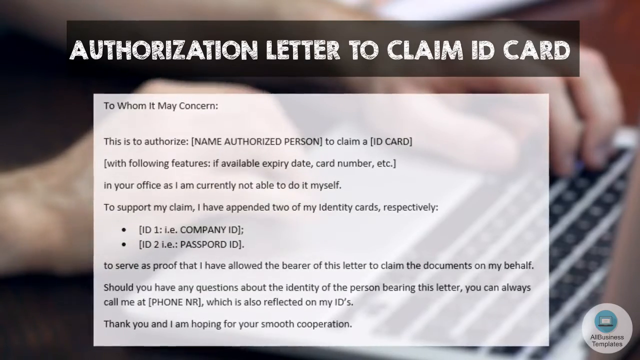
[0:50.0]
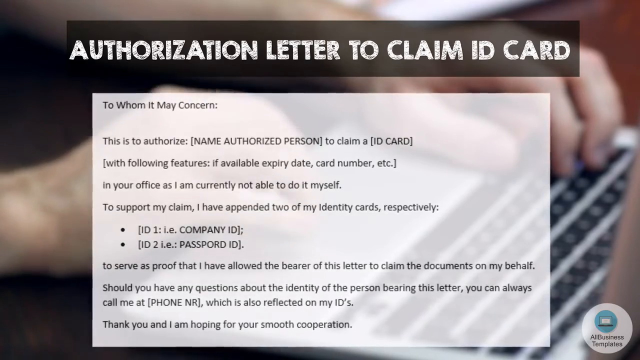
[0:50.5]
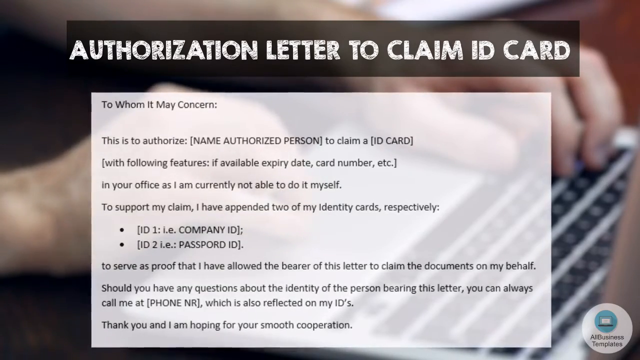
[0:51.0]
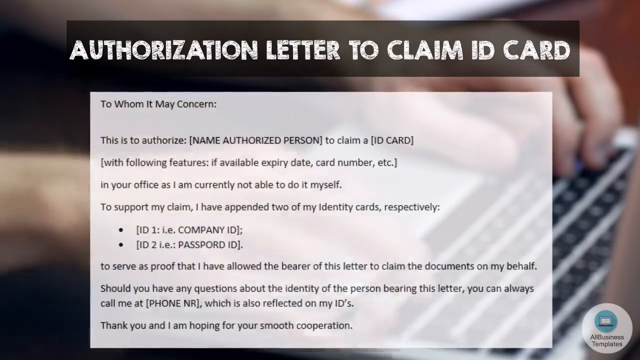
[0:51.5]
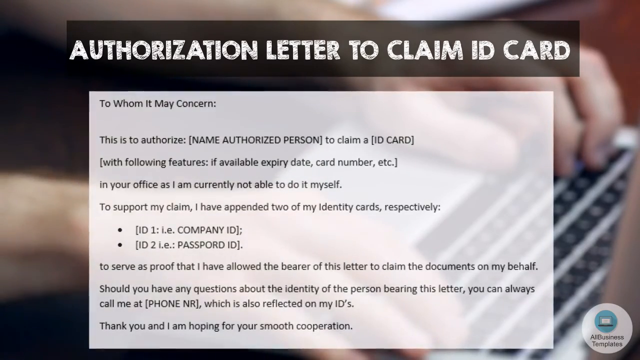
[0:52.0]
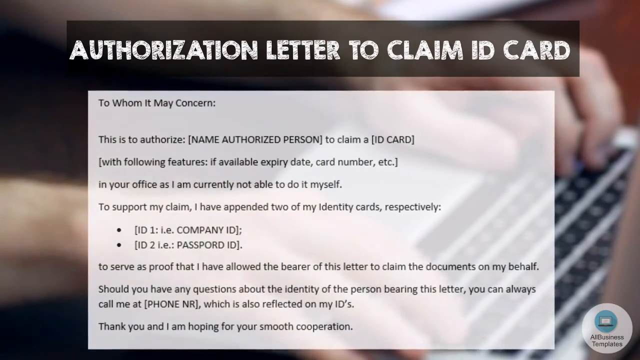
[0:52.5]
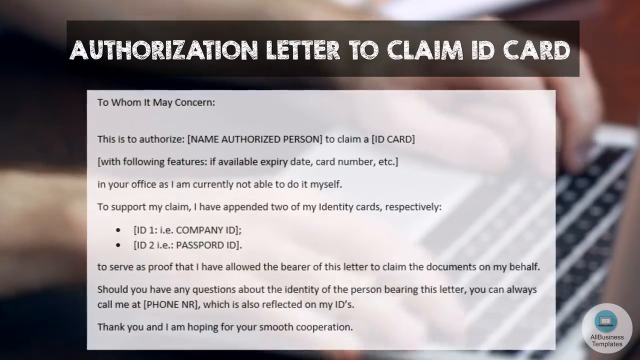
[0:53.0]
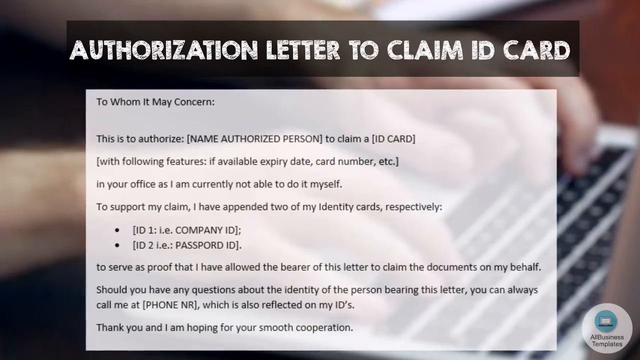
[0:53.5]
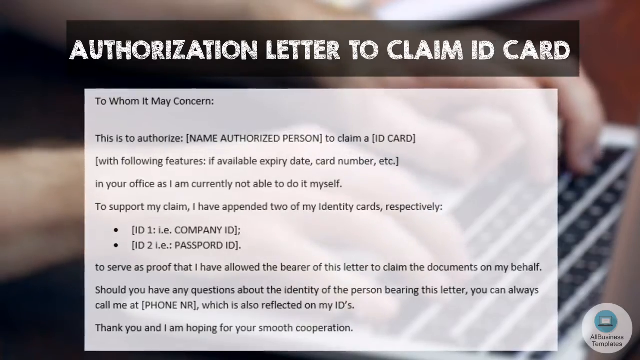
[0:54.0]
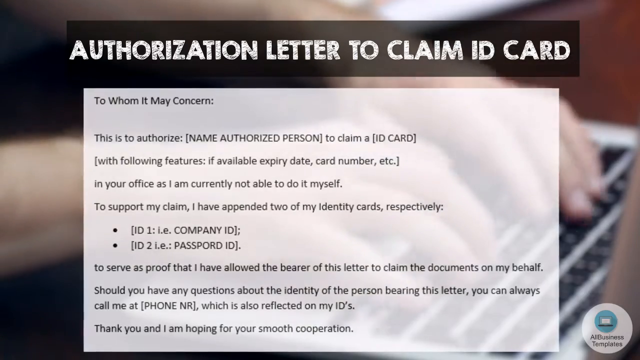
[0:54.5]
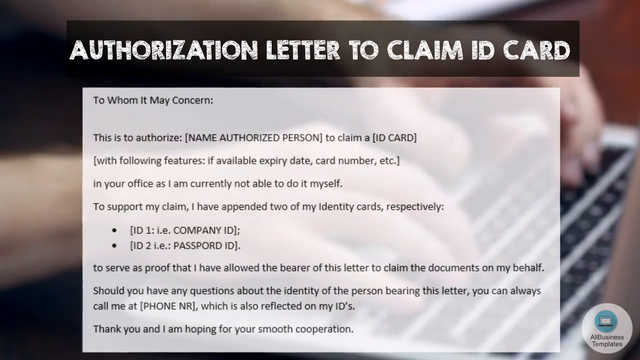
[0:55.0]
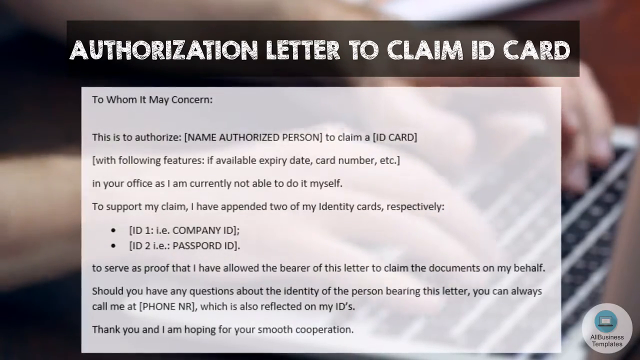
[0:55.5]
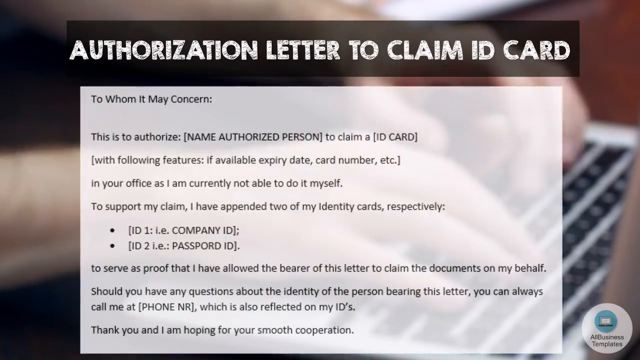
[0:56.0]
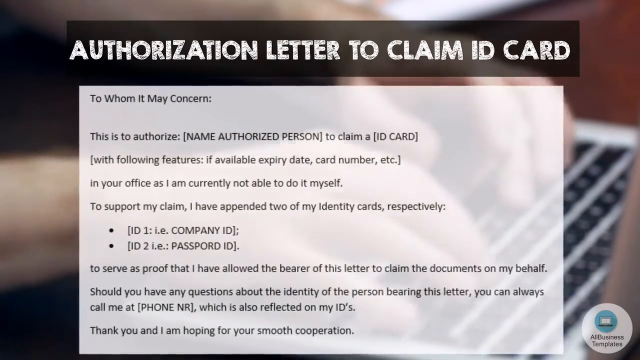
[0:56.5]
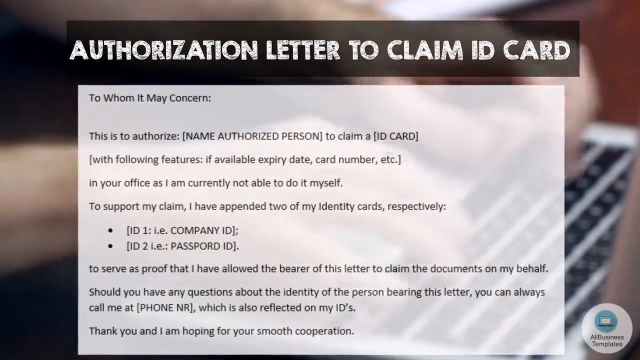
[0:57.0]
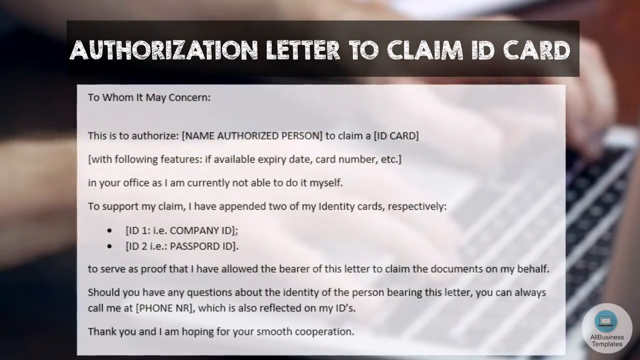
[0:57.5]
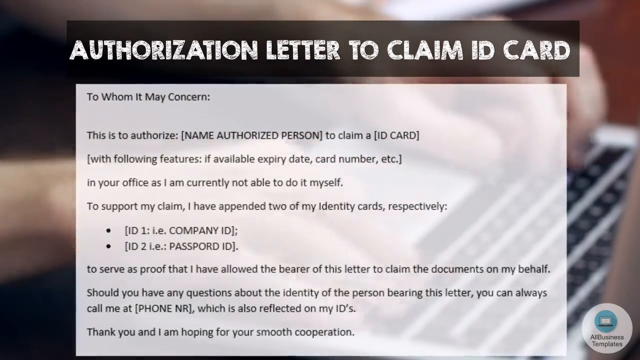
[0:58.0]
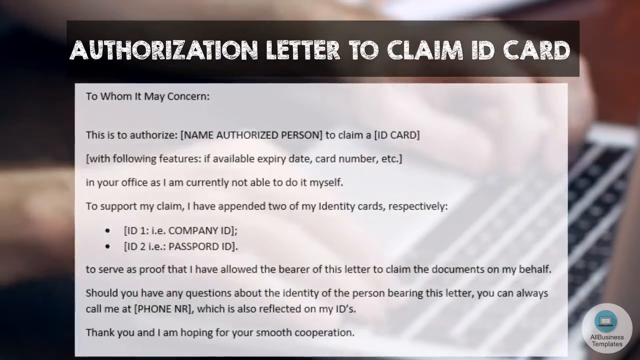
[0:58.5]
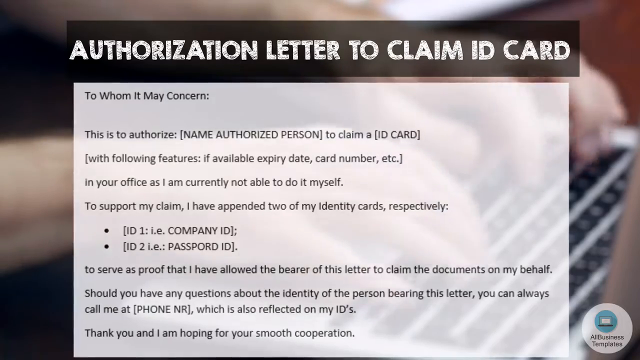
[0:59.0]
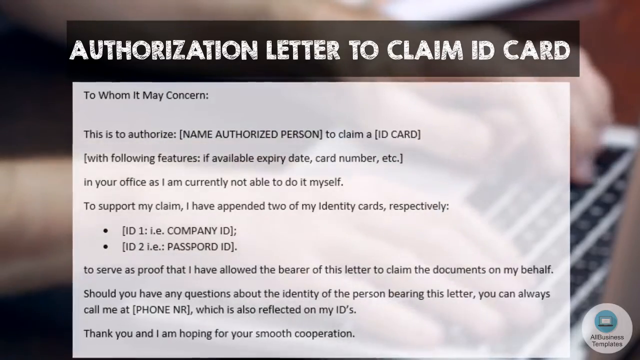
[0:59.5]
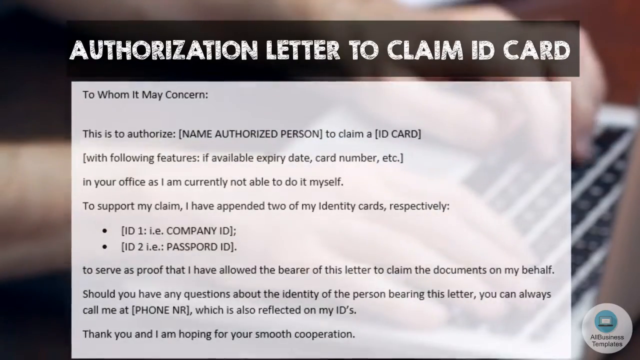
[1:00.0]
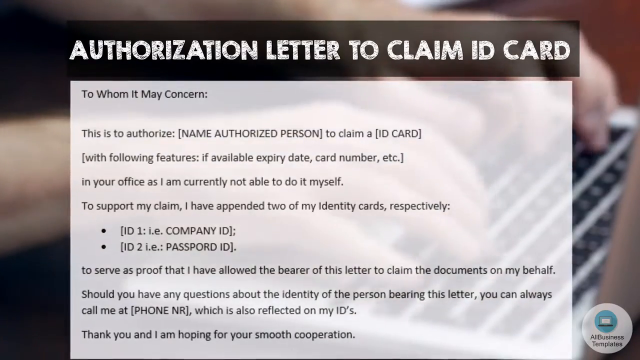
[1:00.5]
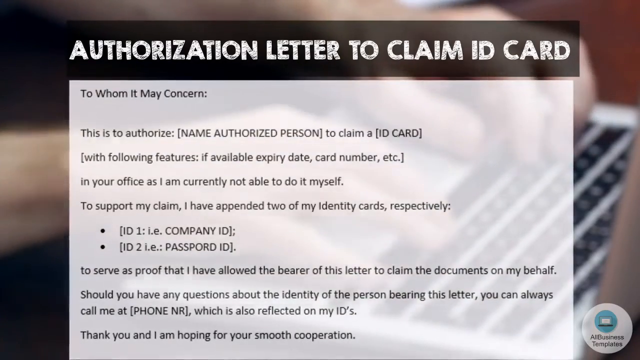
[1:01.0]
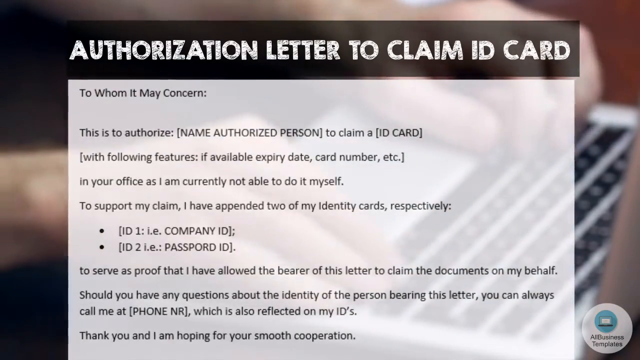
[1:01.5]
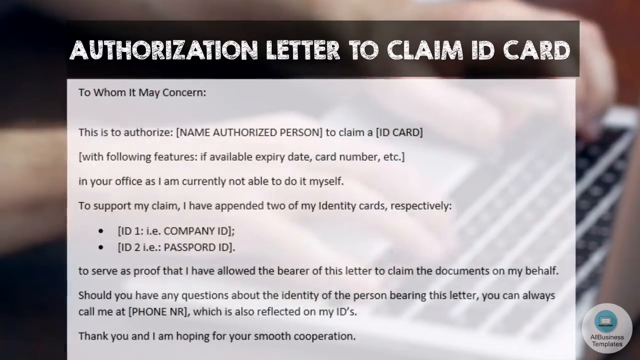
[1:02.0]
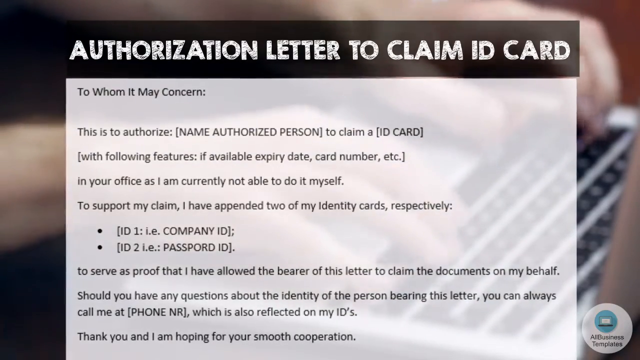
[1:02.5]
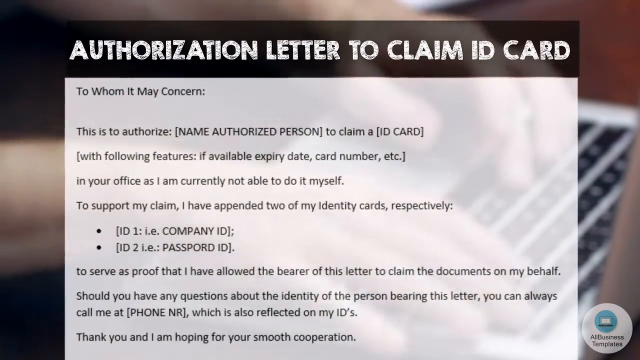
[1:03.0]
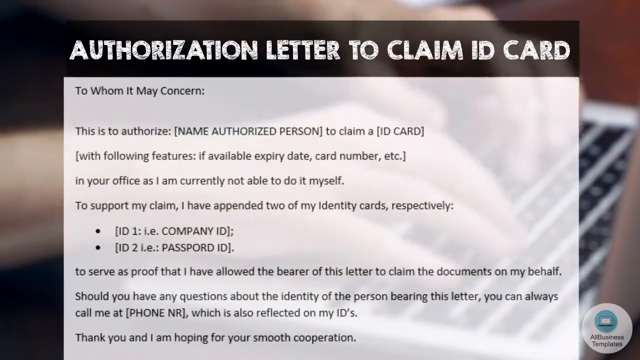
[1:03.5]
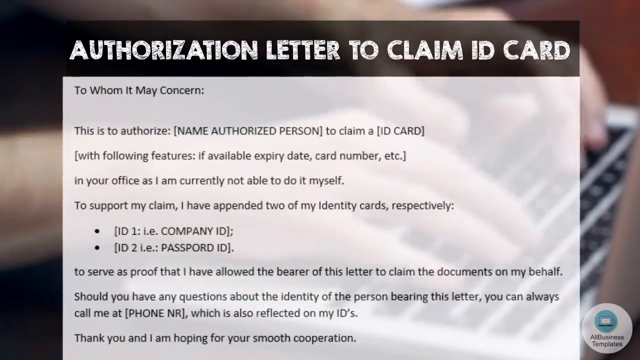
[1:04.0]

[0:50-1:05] A laptop is in the backdrop, and a transparent card is at the center of the screen. Two Caucasian hands type on the keyboard of the gray laptop. At the top of the video, text reads "authorization letter to claim ID card." The transparent card holds a pre-written letter showing what to say in order to claim an ID card without having to show up at the office in person, by providing a couple of pieces of information so the recipient can verify it easily. It also suggests calling to verify if necessary.